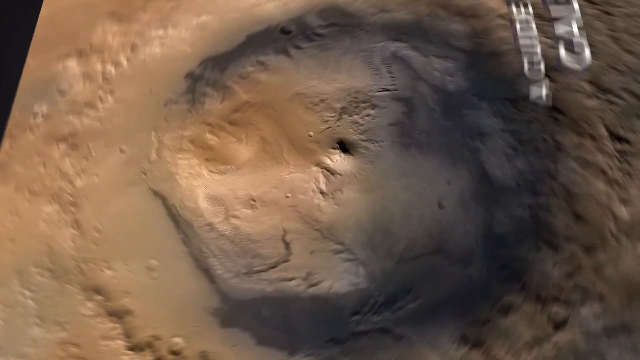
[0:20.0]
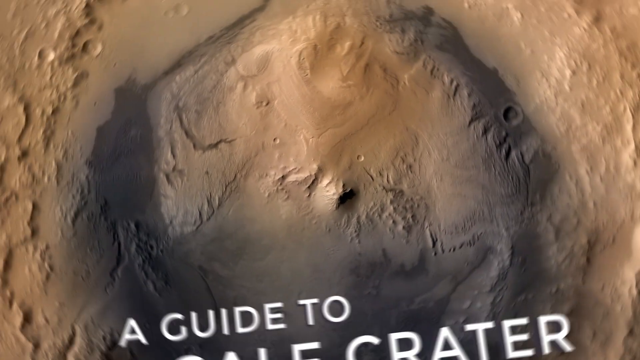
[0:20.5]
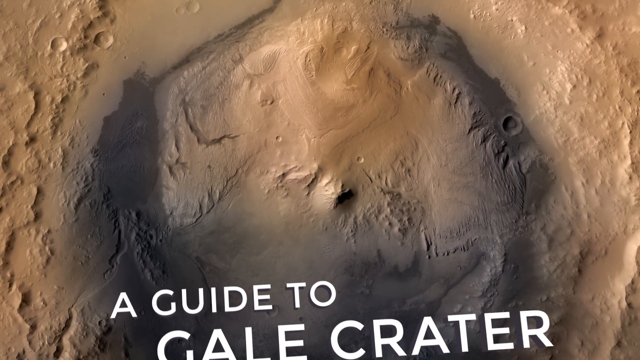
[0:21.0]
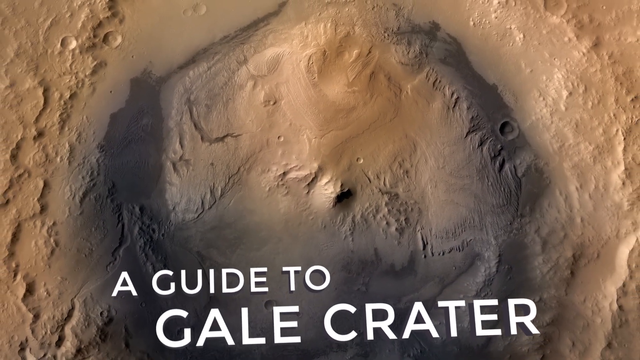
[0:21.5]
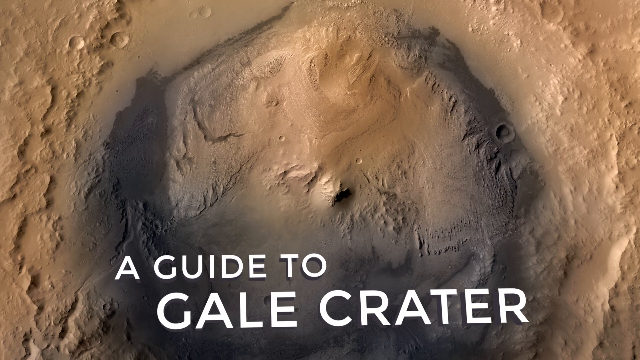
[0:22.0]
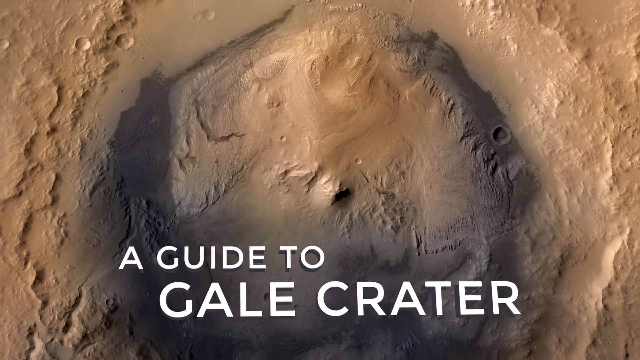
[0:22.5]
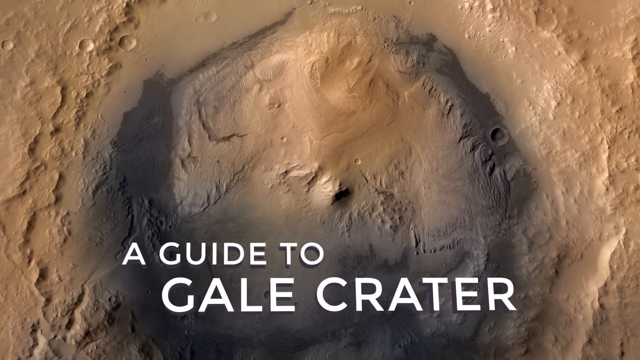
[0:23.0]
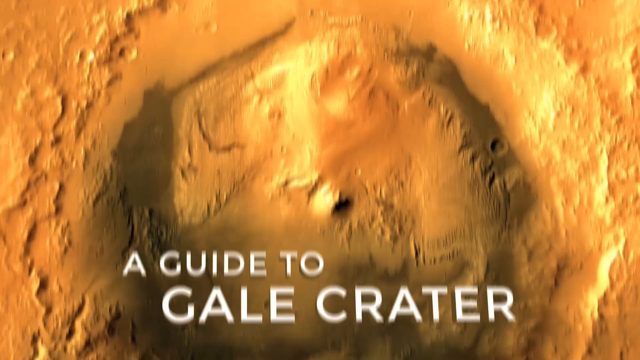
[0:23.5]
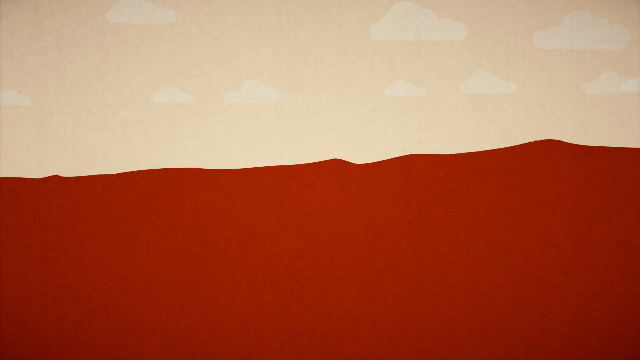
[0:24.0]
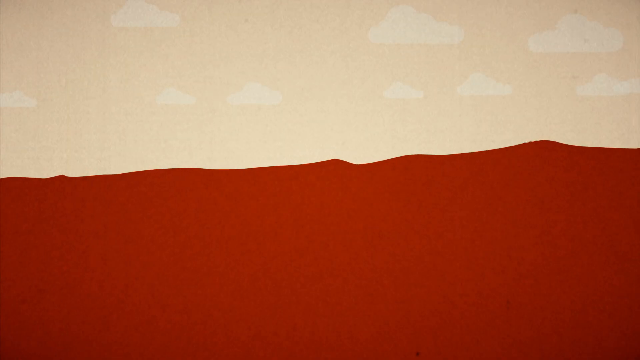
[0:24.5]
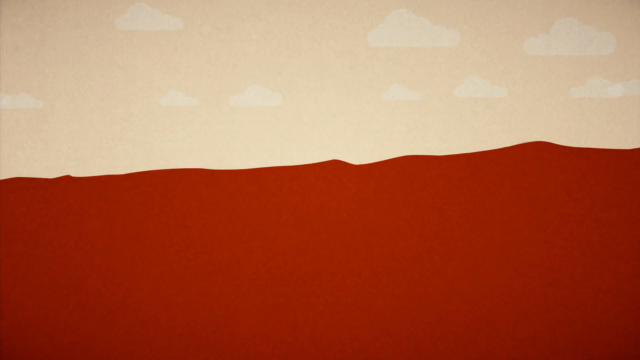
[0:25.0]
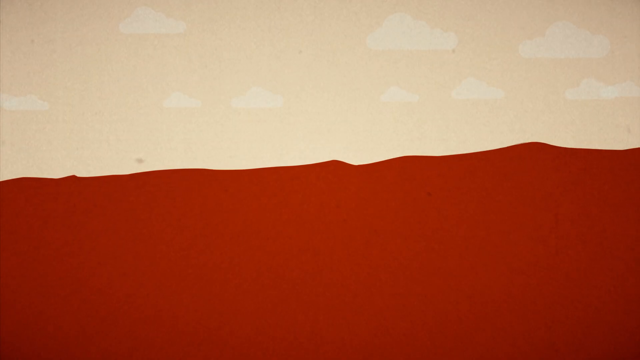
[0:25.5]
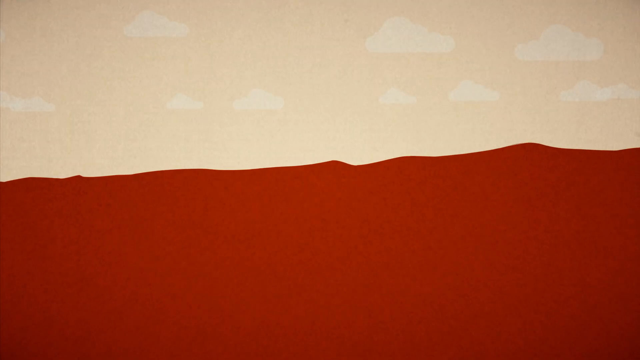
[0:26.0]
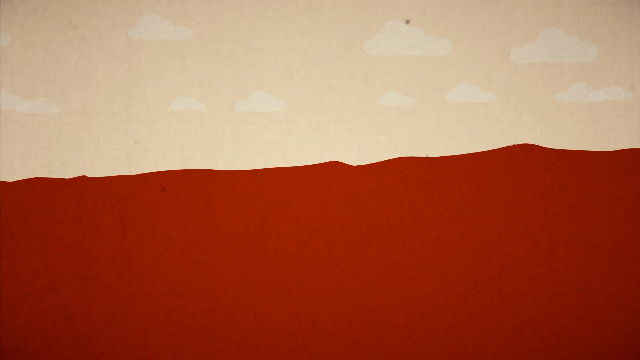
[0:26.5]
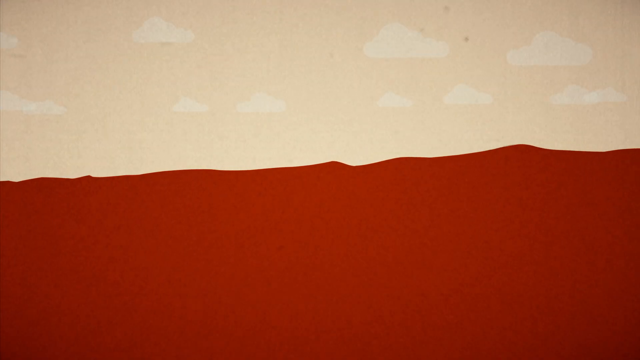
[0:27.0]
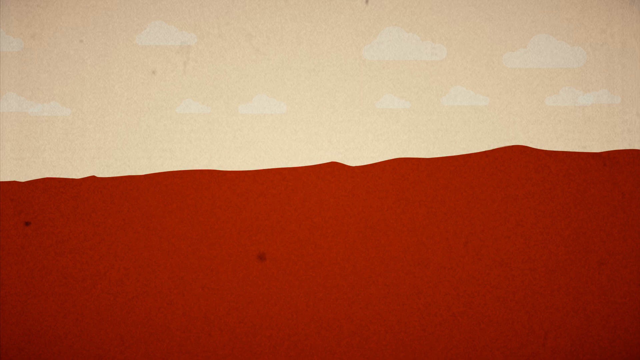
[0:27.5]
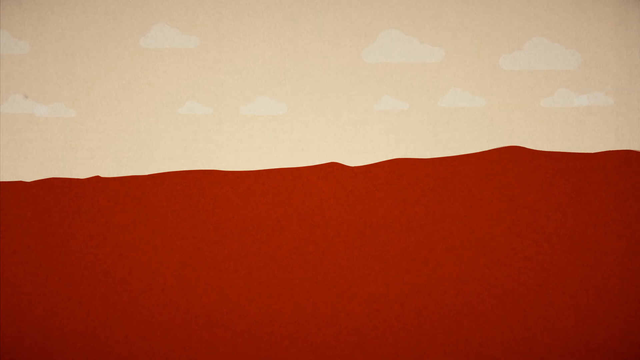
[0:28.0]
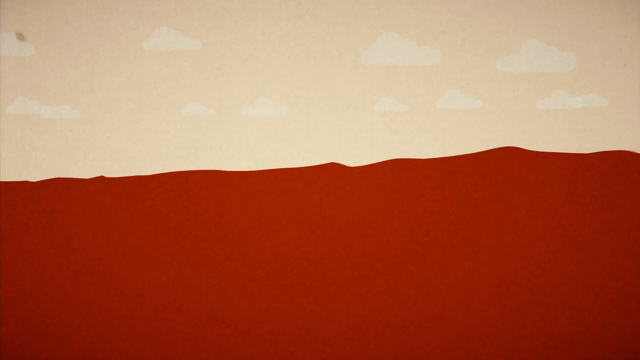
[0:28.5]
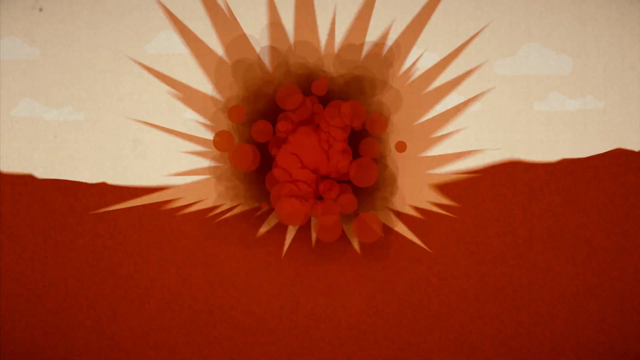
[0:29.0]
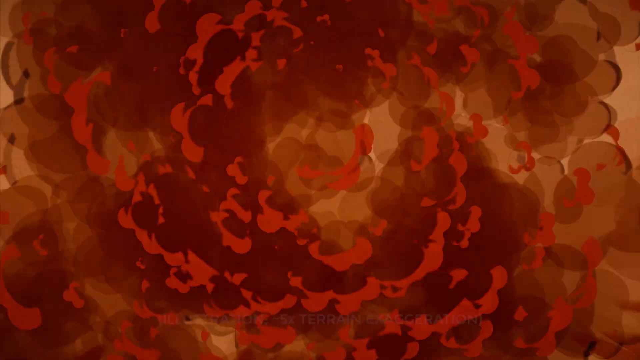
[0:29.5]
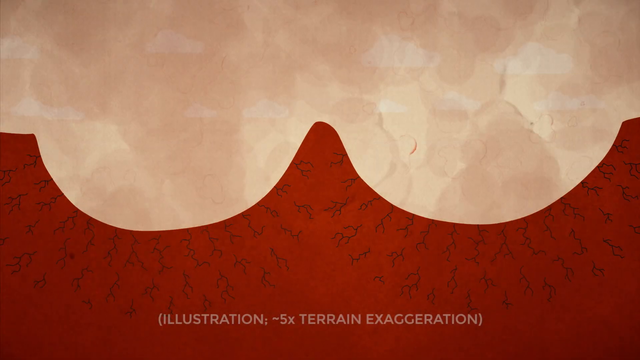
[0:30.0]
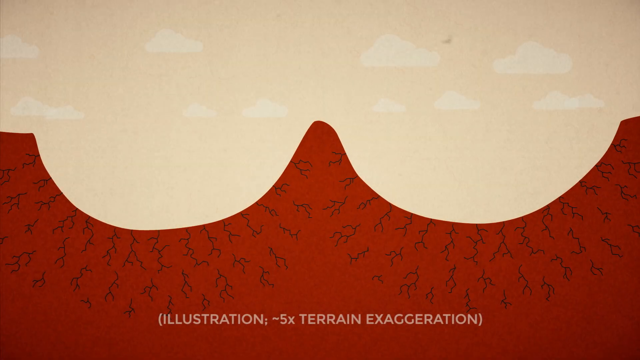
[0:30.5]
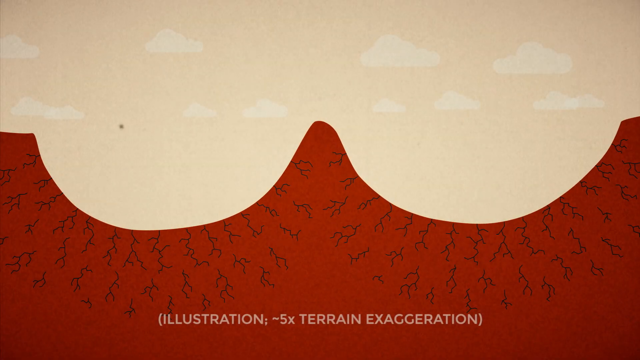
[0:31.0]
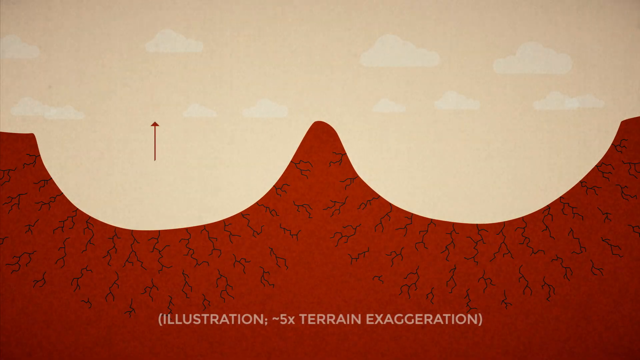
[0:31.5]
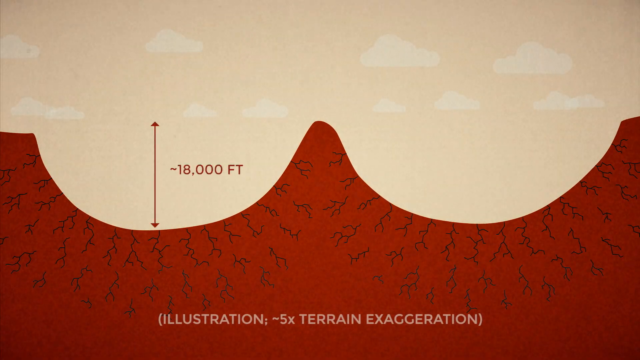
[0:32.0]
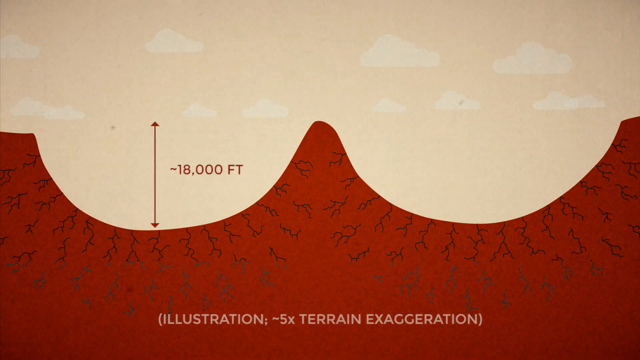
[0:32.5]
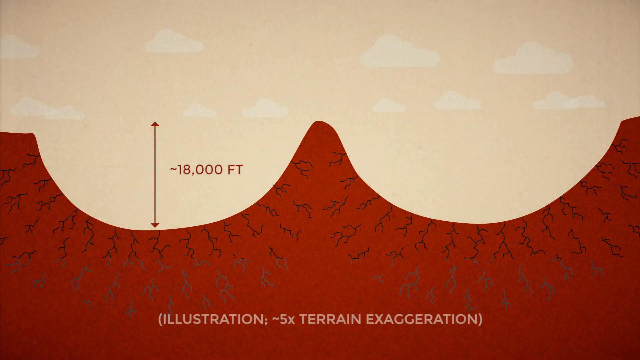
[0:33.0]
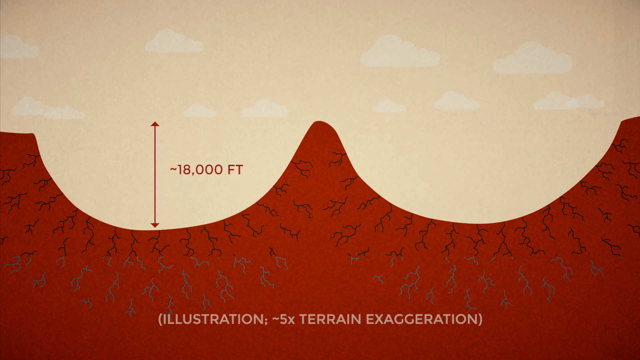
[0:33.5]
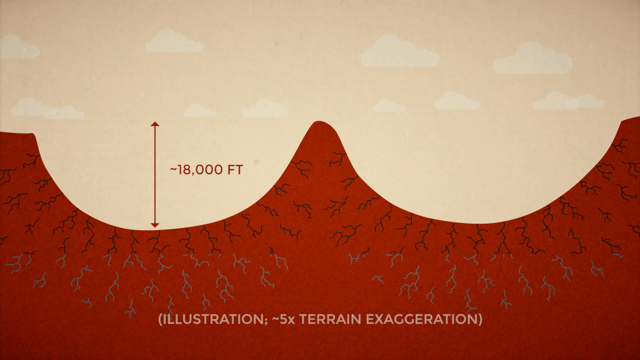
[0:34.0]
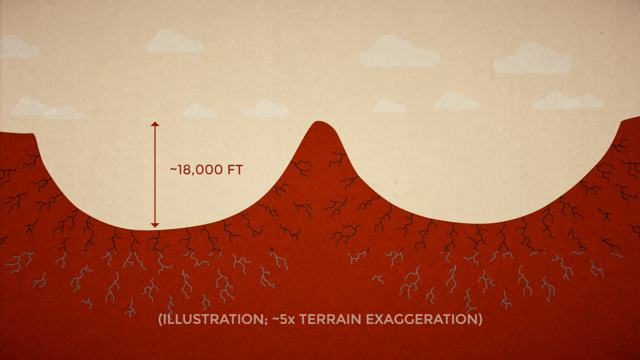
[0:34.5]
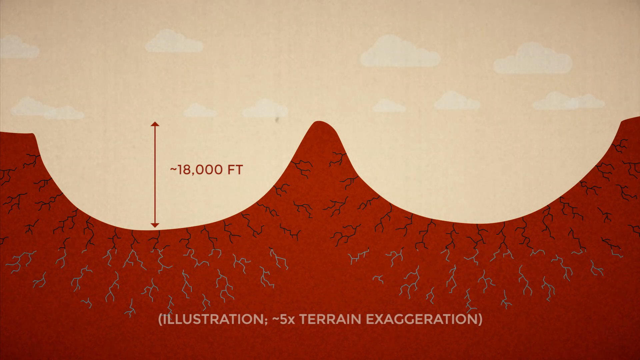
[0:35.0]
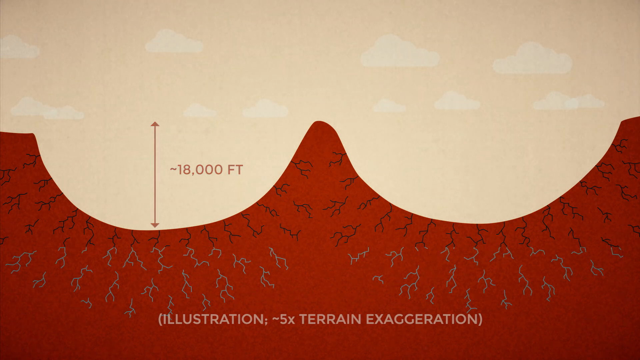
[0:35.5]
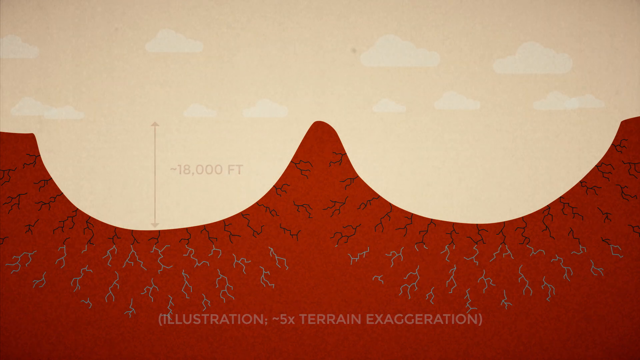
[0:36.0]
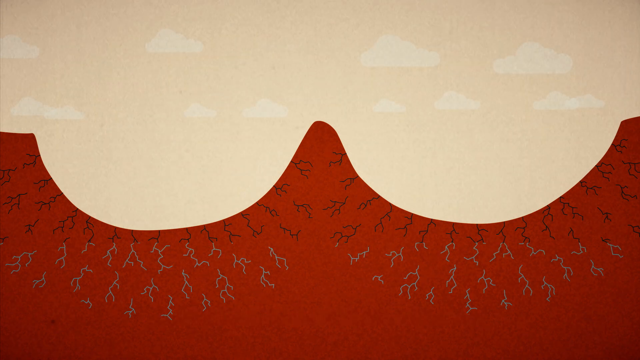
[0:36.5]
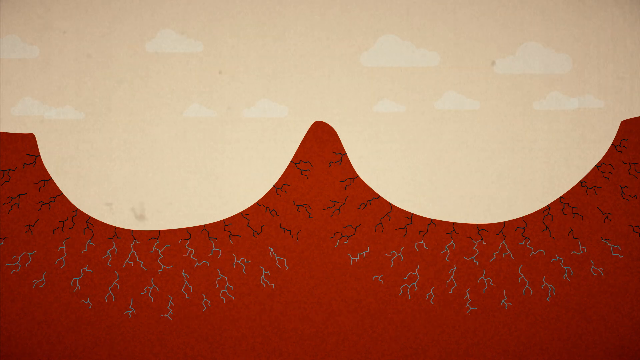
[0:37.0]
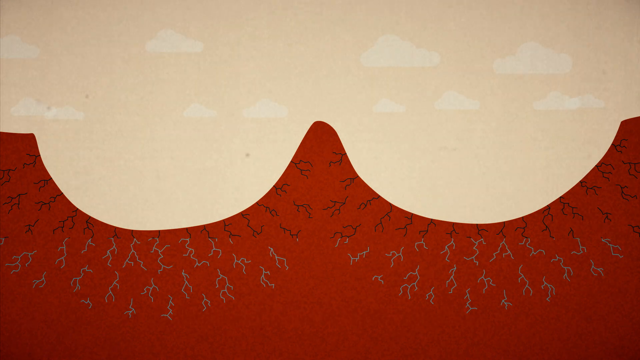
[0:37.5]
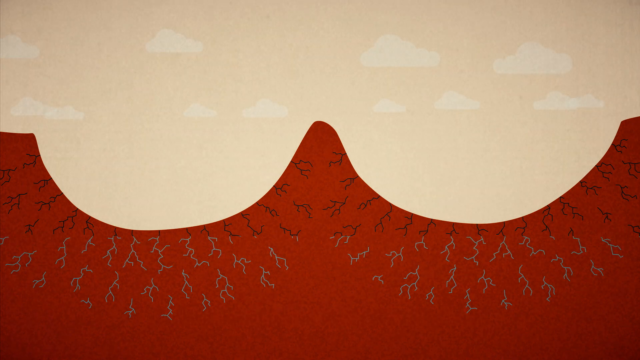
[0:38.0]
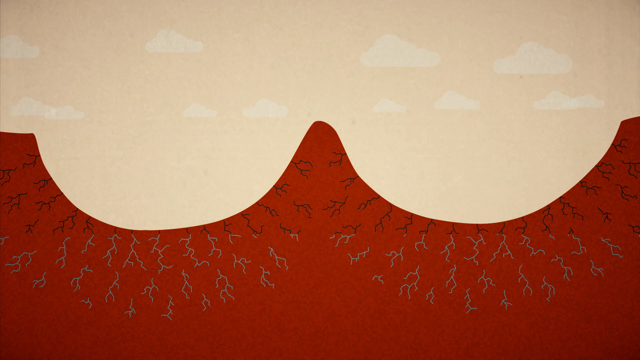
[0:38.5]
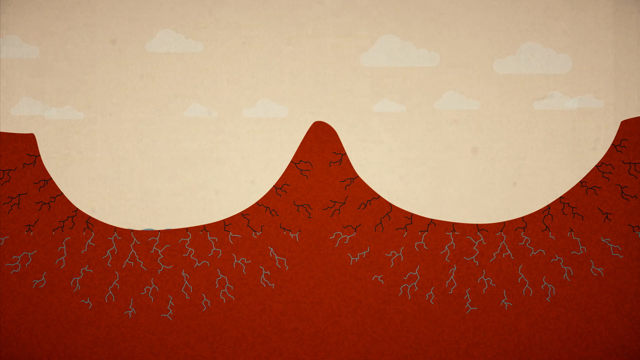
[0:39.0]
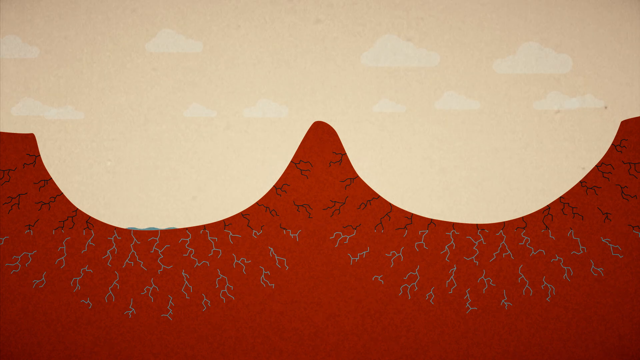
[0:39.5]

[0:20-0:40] The 3D relief map of the crater continues to rotate, and a title in white text is laid over it: "A Guide to Gale Crater". Underneath is an aerial view of the crater, which is fairly round and circular, with a large, deep hole in its center. There are several boulders as well as jagged and mountainous areas that kind of jut out toward the viewer. An illustration then demonstrates how the crater was formed: a red sandy environment fills the lower two-thirds of the screen, with a dusty sky above it holding some light, brownish-white clouds. The surface is struck by an asteroid, and the impact creates a couple of depressions that are kind of W-shaped, along with several root-like cracks. These start to fill up, and the two divots in the rocky surface are indicated as 18,000 feet deep.